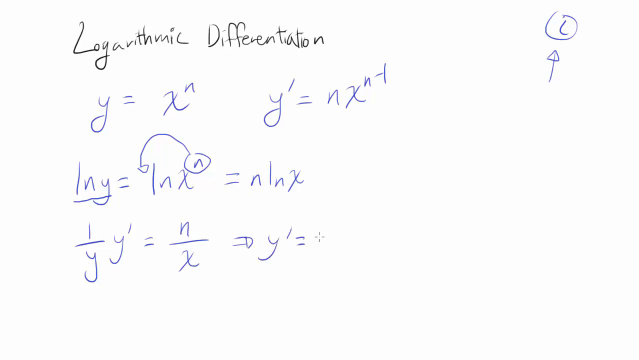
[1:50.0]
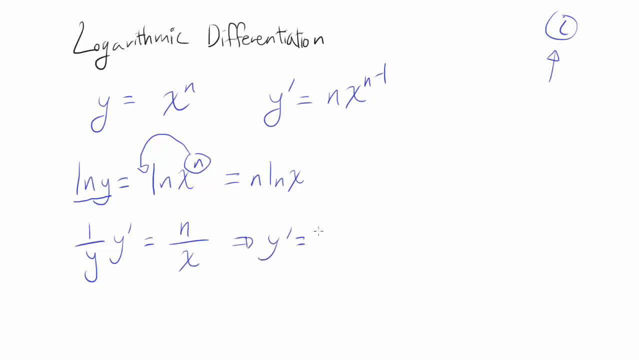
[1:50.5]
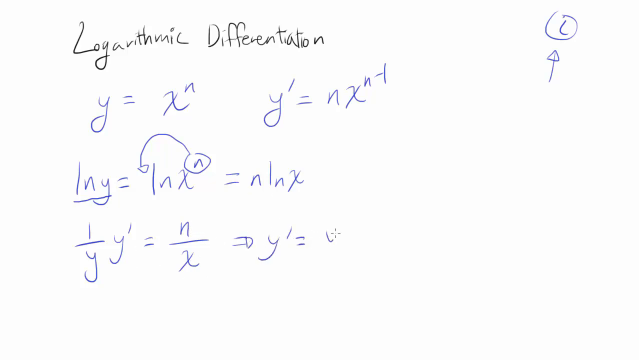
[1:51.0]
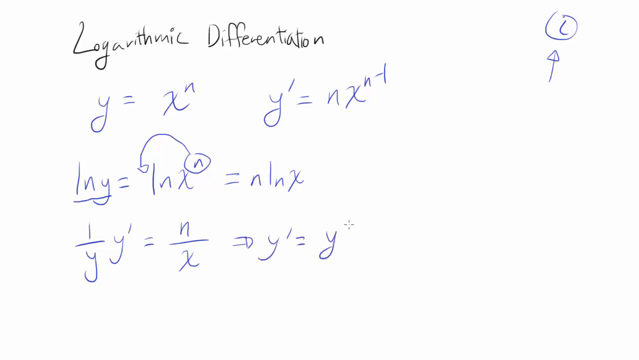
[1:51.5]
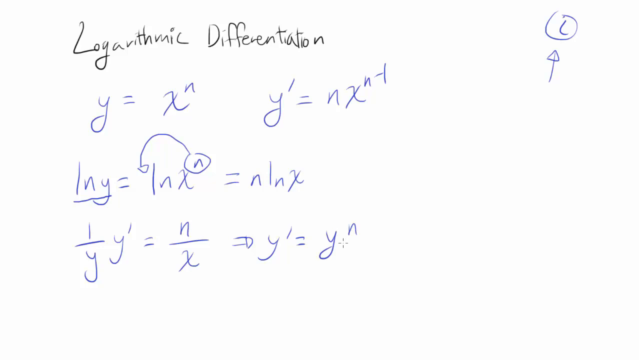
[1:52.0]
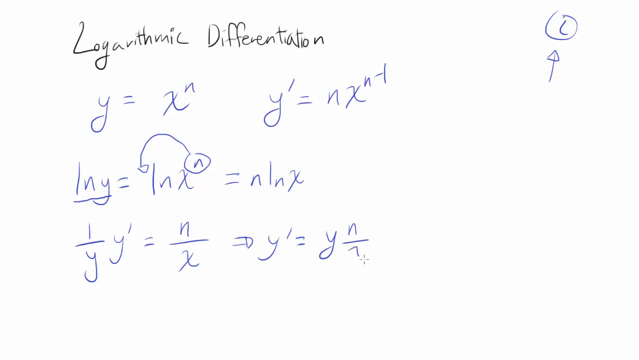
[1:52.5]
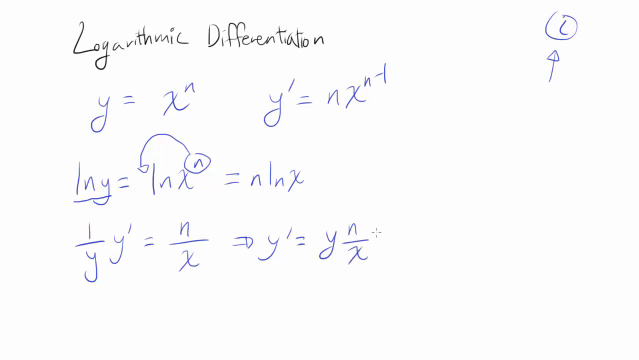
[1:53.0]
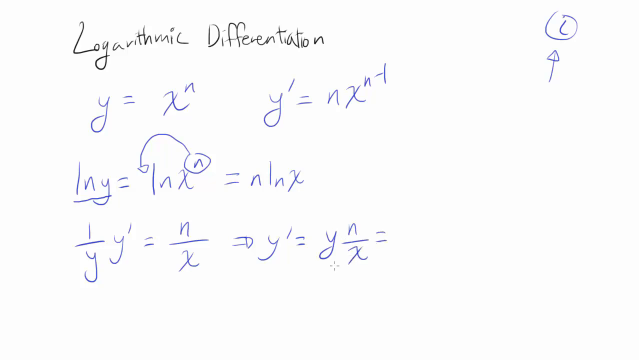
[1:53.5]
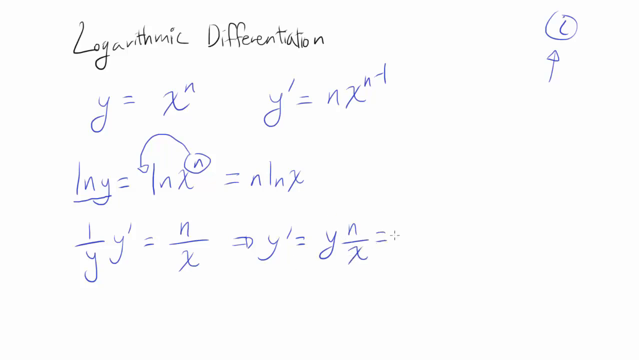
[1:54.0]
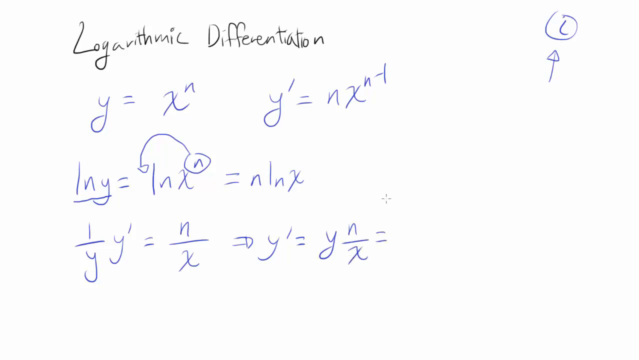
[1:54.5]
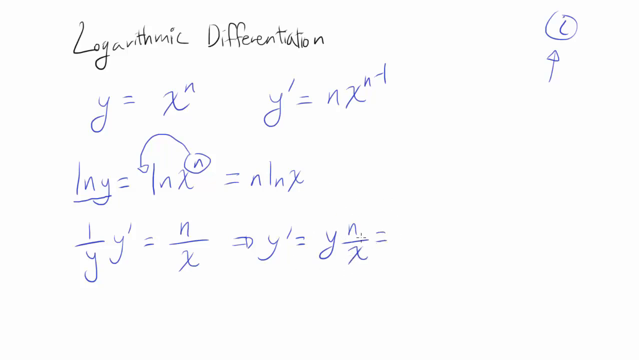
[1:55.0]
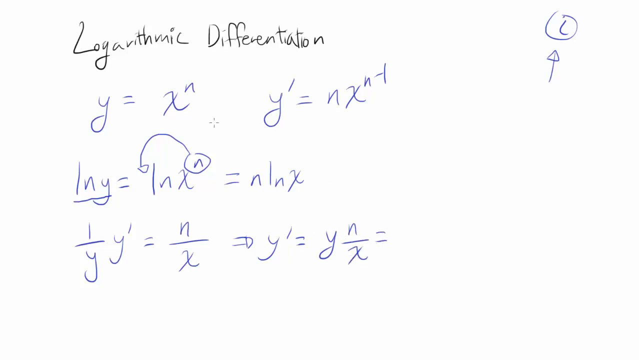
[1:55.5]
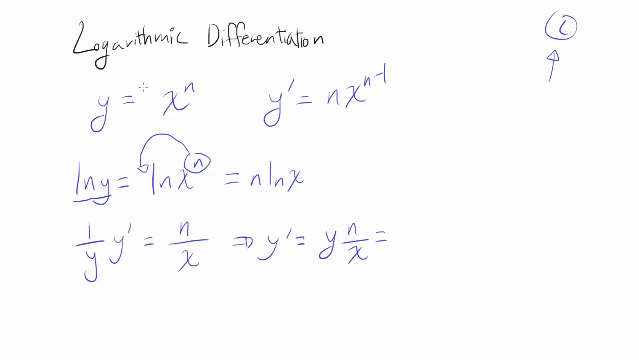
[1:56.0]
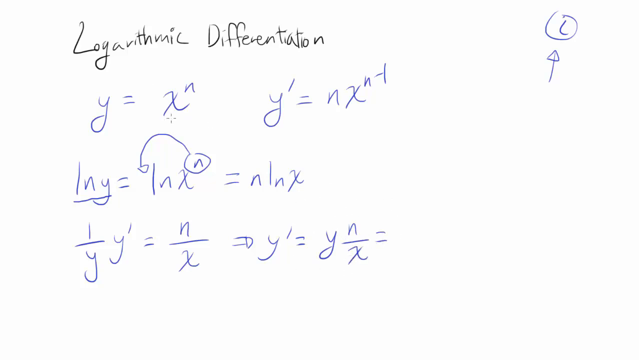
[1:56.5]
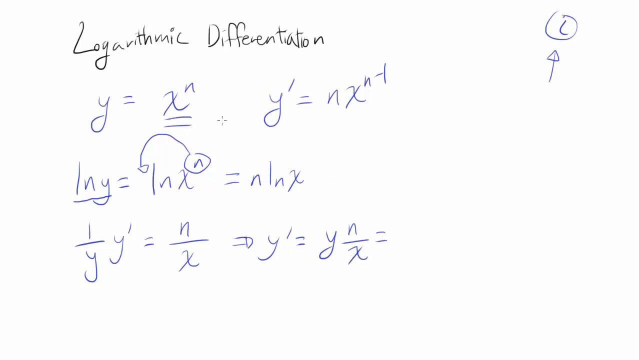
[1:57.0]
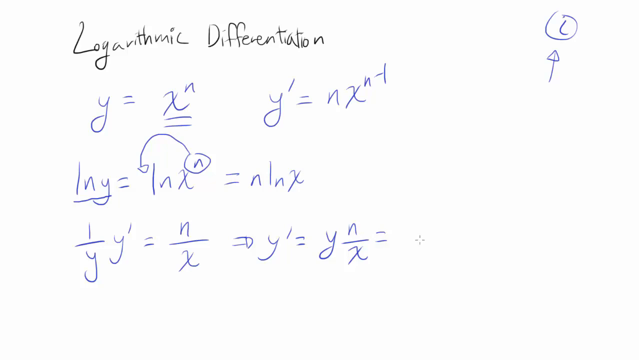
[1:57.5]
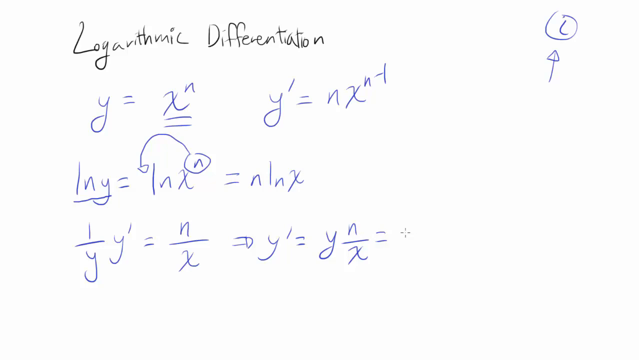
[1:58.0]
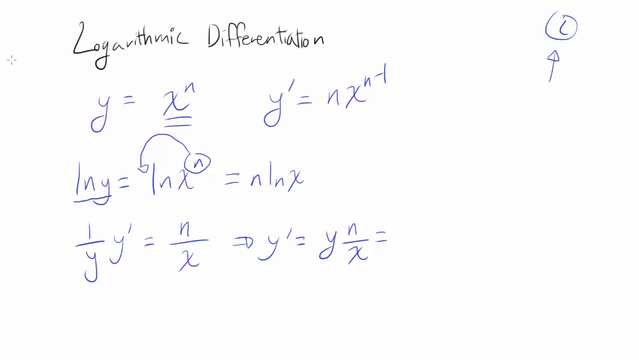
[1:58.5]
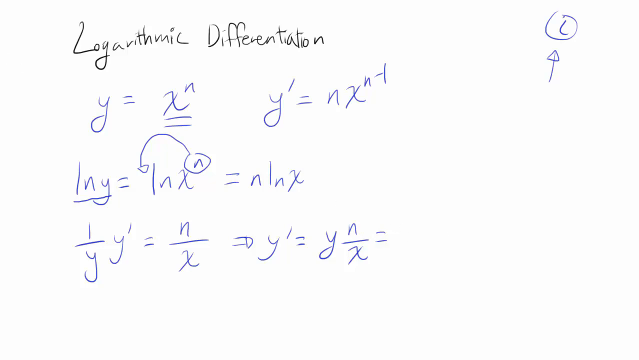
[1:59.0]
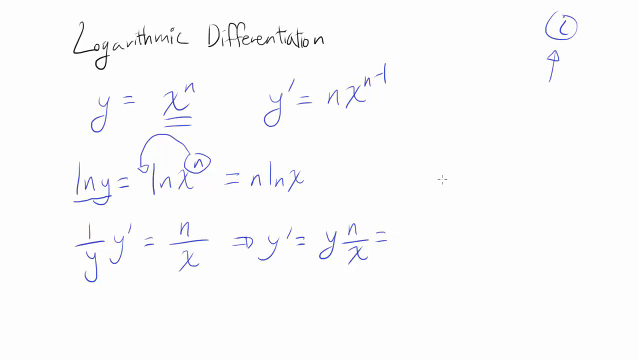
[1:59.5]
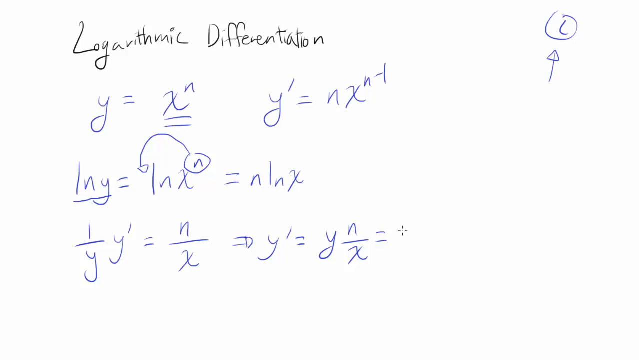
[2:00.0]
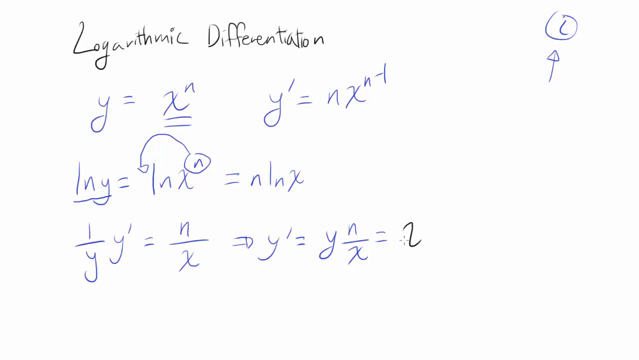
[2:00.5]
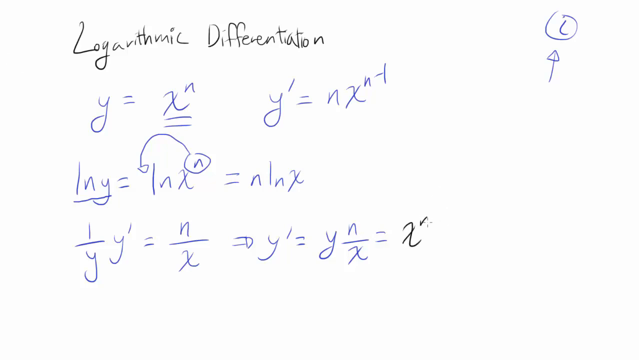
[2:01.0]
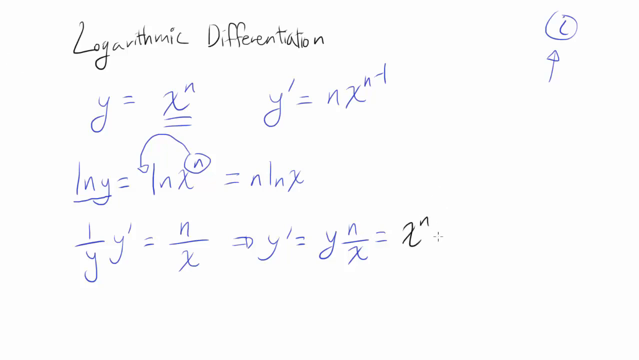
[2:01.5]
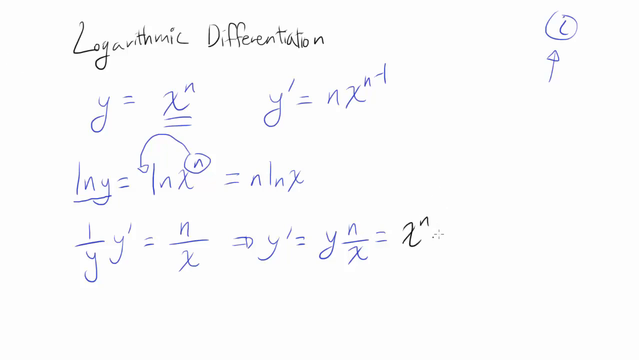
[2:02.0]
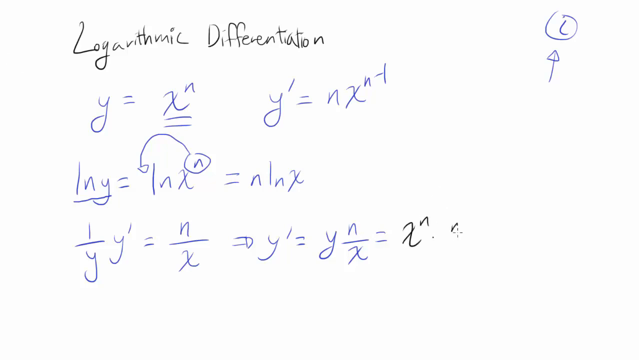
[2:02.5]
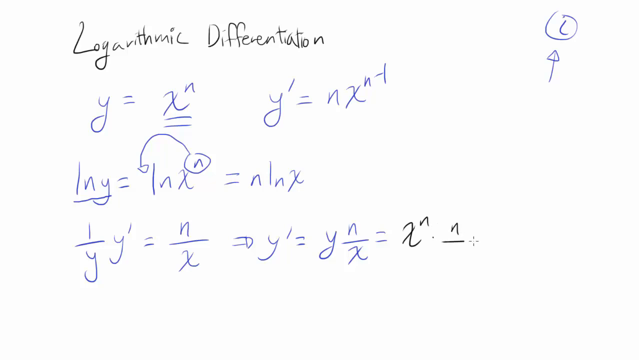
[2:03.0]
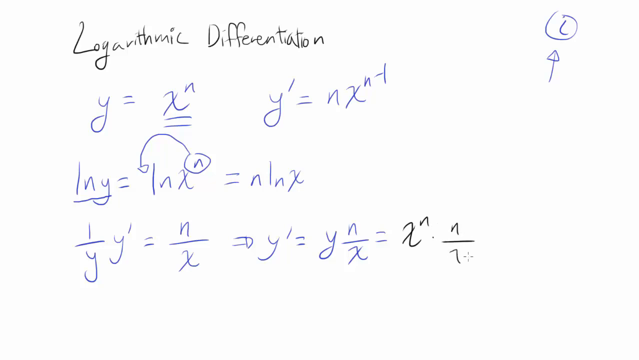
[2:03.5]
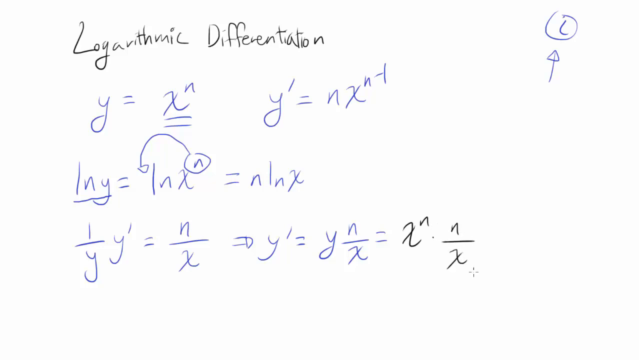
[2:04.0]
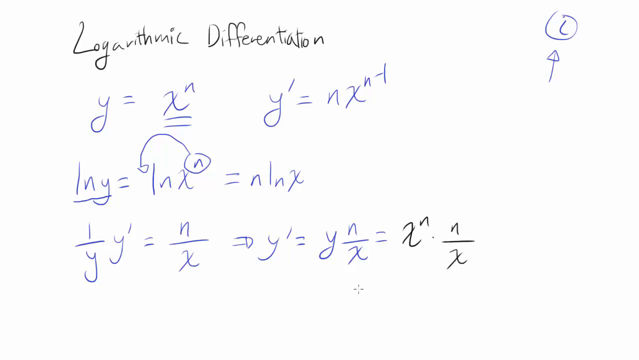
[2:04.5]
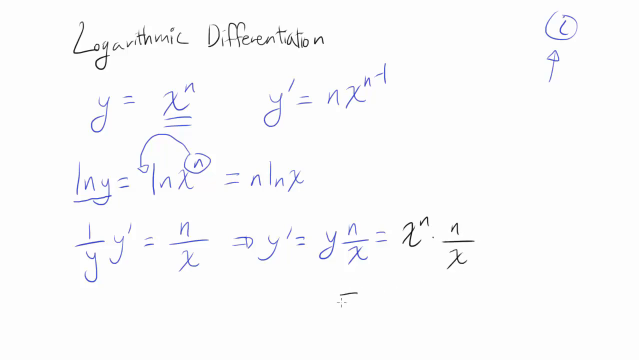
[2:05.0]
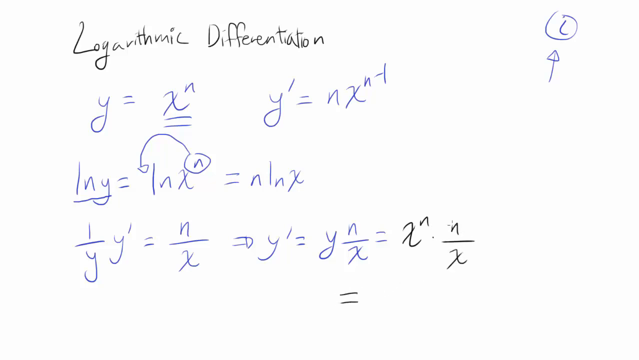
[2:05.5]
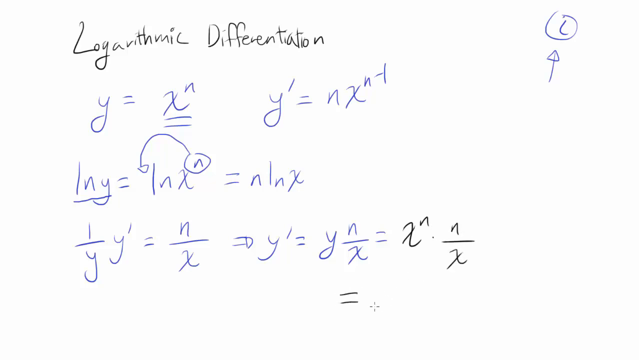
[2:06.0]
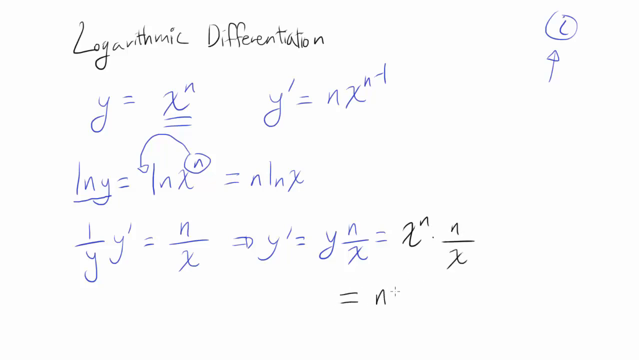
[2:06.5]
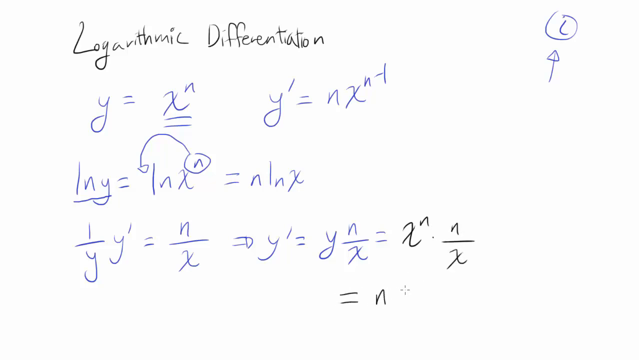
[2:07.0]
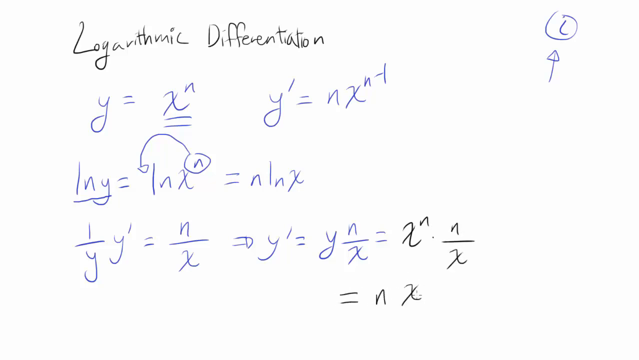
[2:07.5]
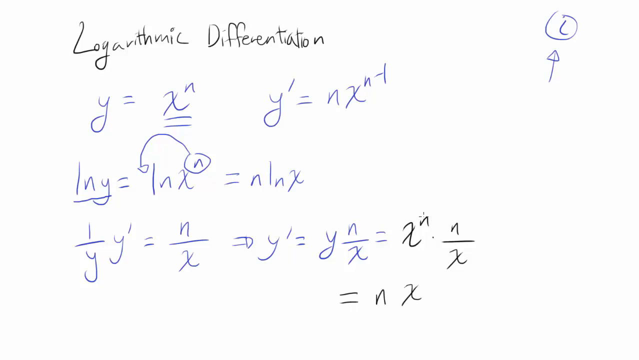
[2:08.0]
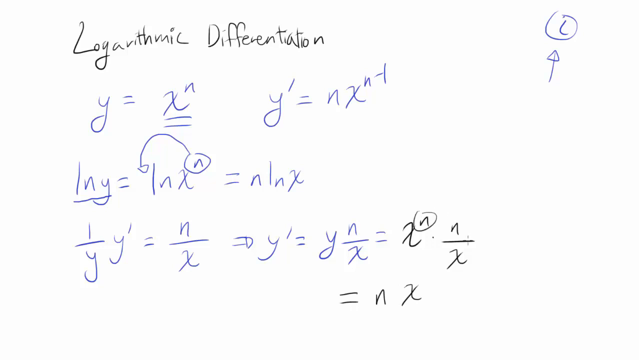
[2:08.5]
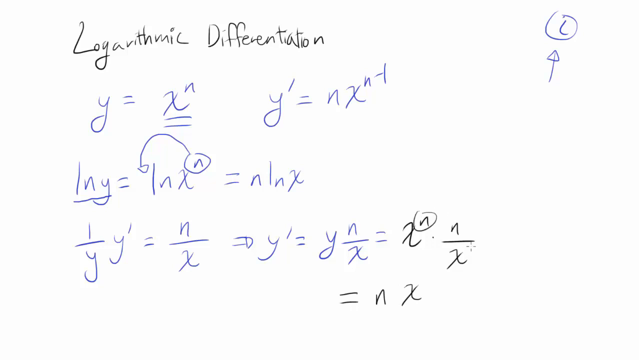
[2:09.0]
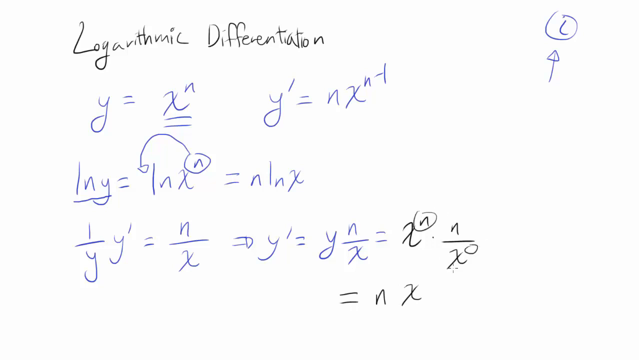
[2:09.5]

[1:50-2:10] A whiteboard shows "logarithmic differentiation" in black lettering. In blue lettering is y equals x n, with two lines below the x. The second equation is a y with a one at its top right, an equals sign, and nx with nt at the top right. Below that line are further lines with an equals sign and a one, and a semicircle with a triangle goes around to the one. Then comes an equals sign, n, a line down, n and x. The next line is a one over y, beside it the letter y with a one at the top right, an equals sign, and n over x. An equals sign has a small d touching its lines, followed by y with a one at the top right, equals, y, n over x. These are in black letters, and the n at the top right is circled.